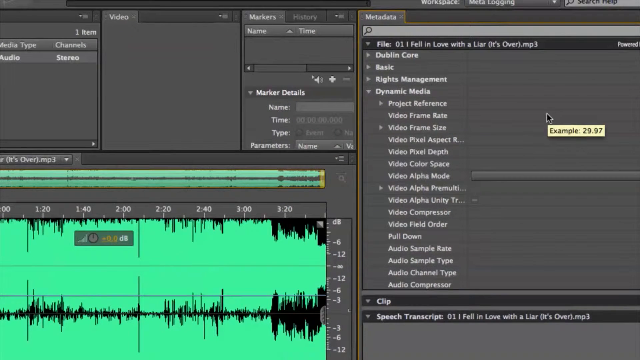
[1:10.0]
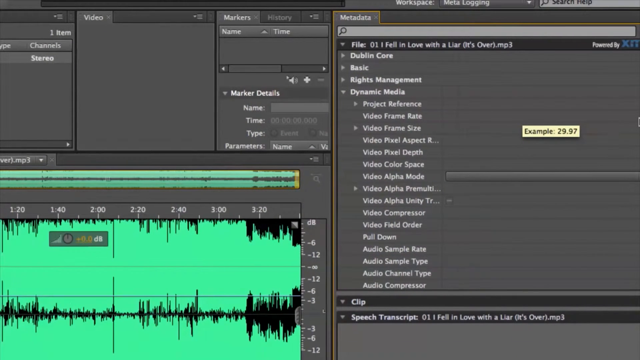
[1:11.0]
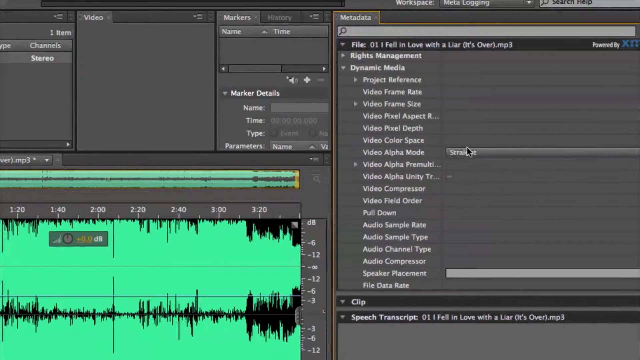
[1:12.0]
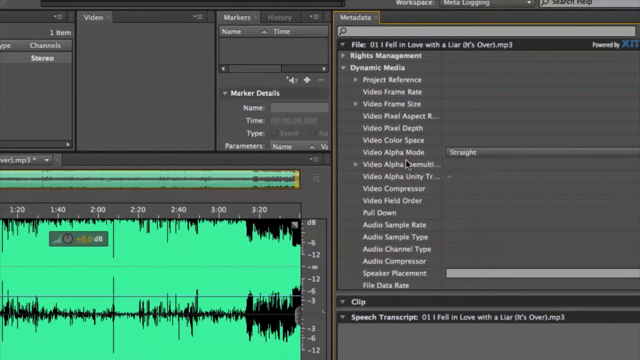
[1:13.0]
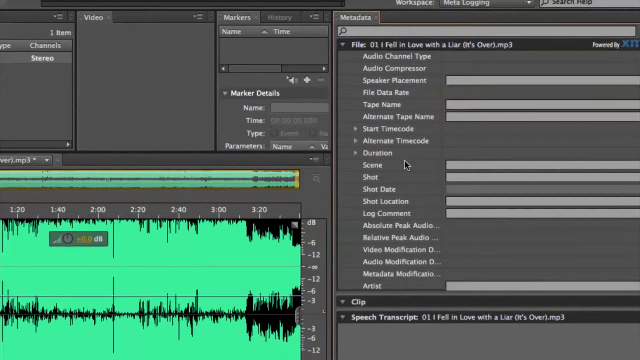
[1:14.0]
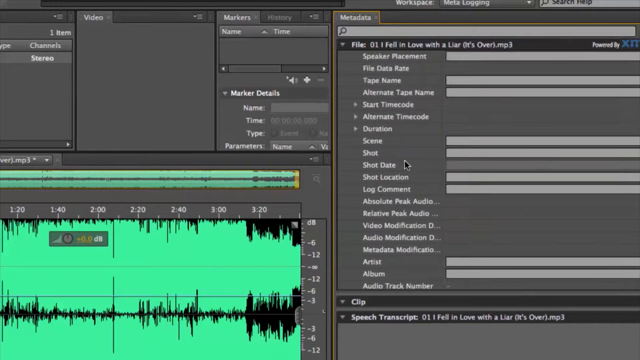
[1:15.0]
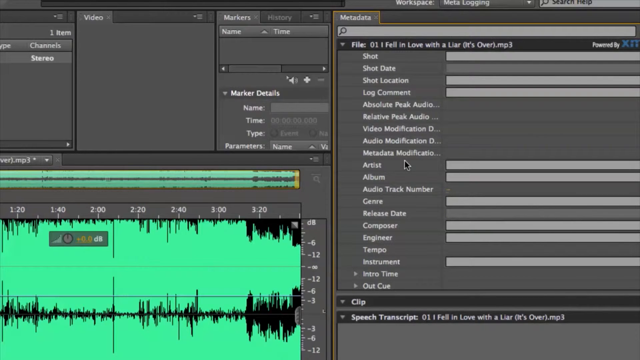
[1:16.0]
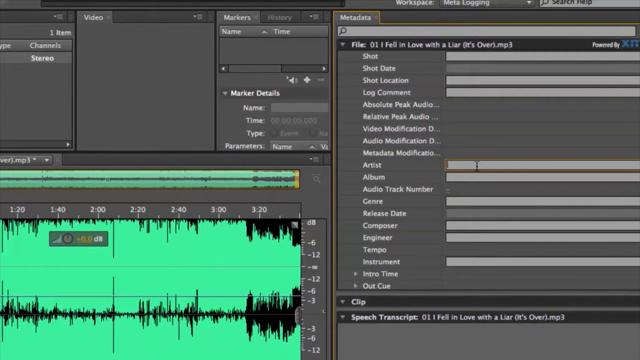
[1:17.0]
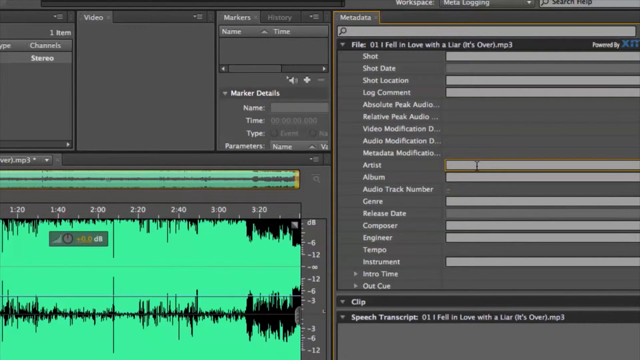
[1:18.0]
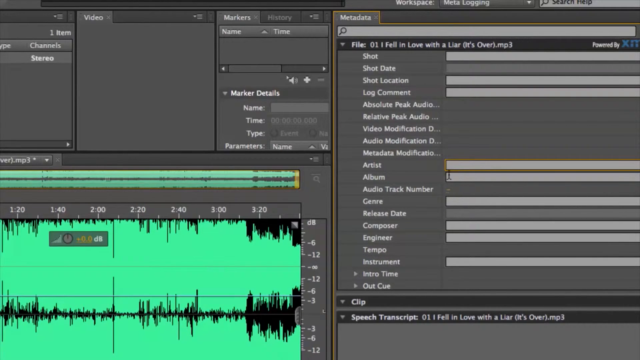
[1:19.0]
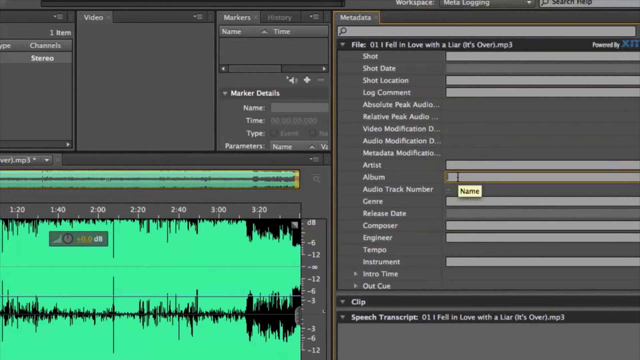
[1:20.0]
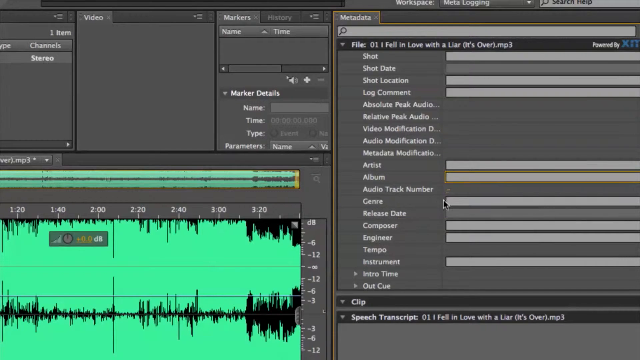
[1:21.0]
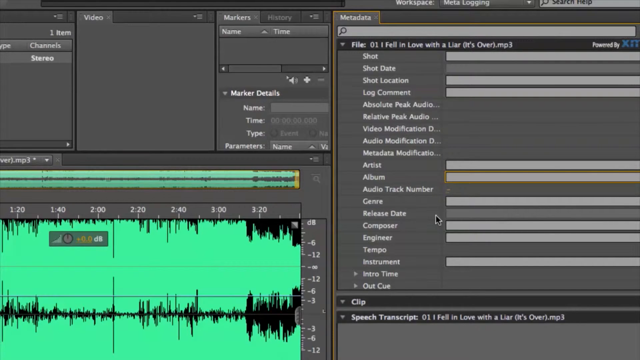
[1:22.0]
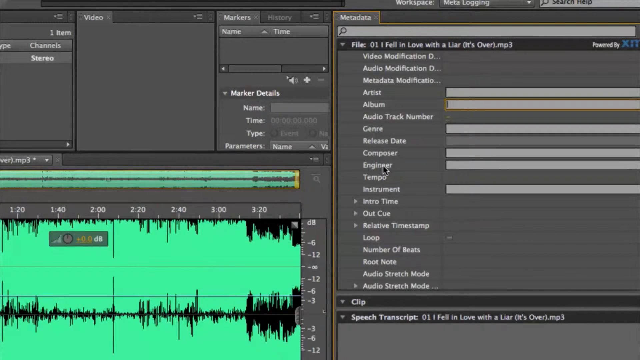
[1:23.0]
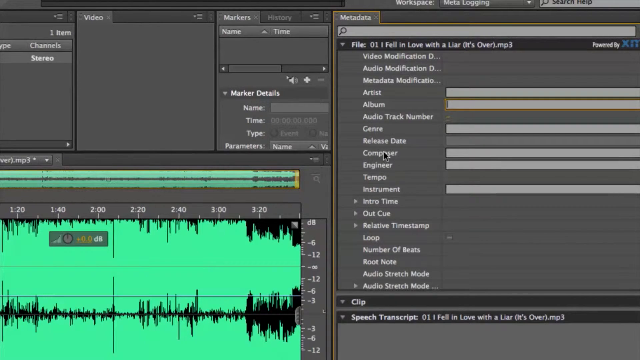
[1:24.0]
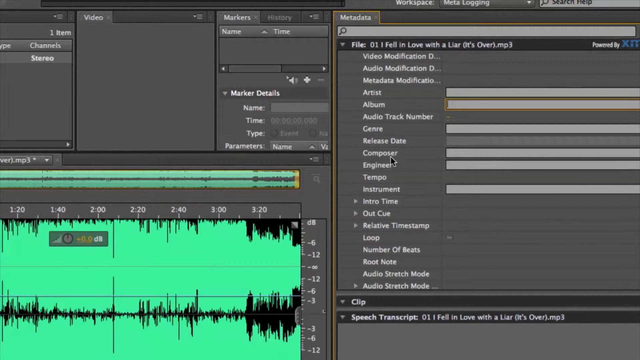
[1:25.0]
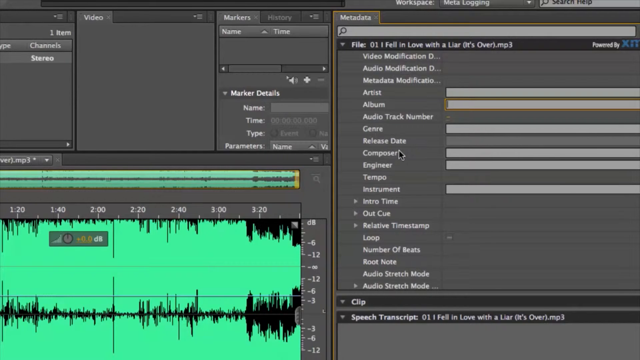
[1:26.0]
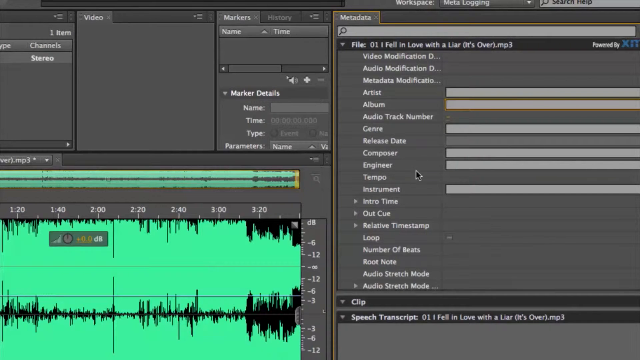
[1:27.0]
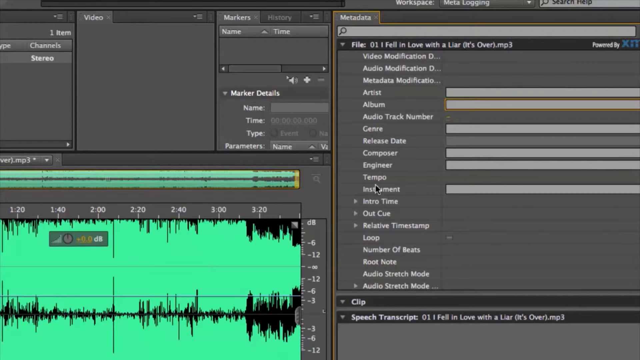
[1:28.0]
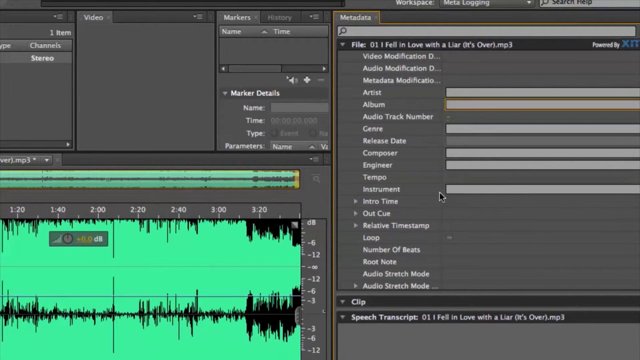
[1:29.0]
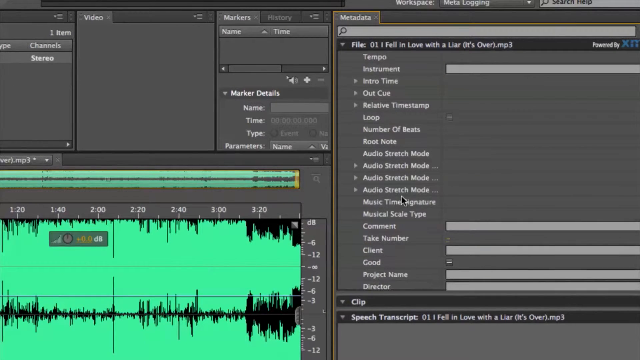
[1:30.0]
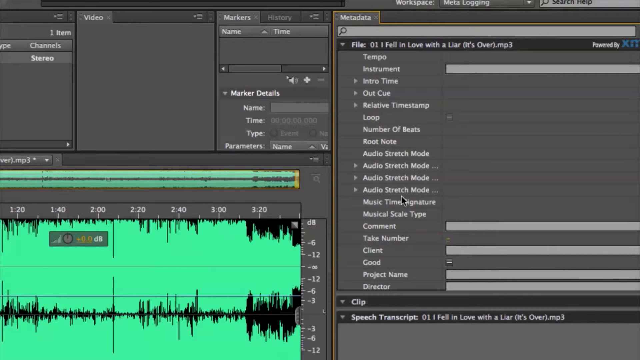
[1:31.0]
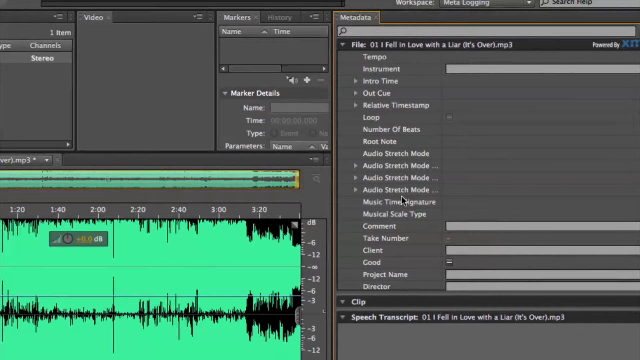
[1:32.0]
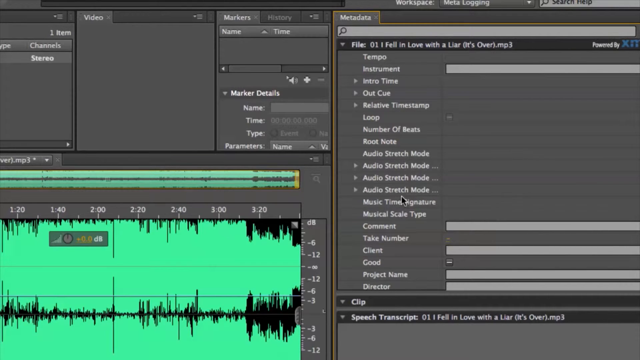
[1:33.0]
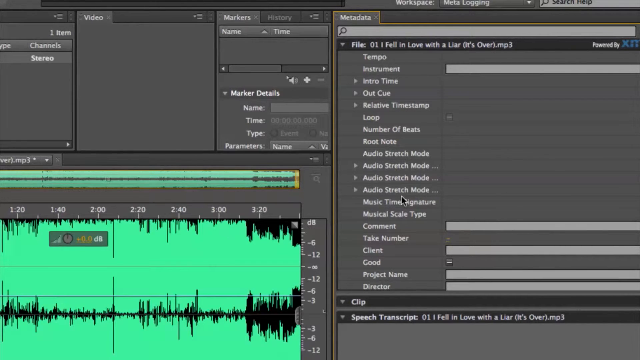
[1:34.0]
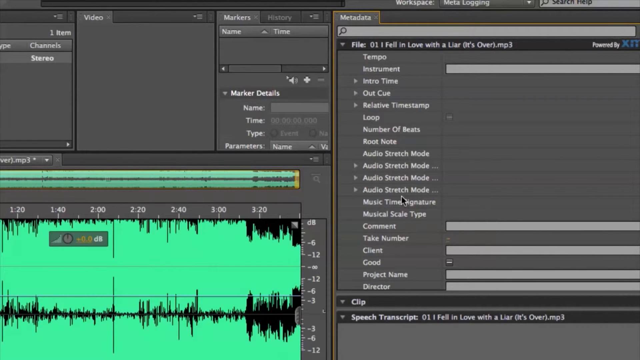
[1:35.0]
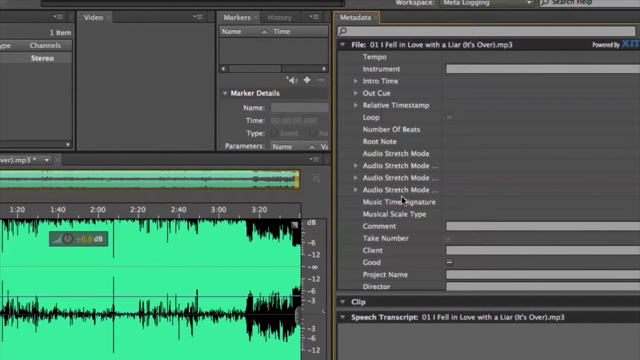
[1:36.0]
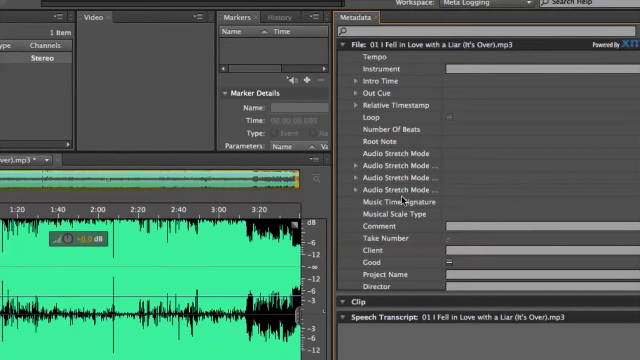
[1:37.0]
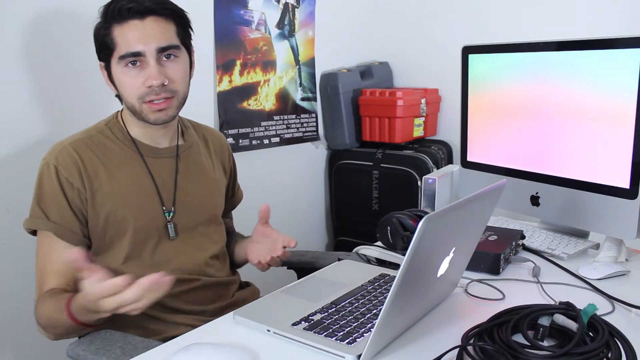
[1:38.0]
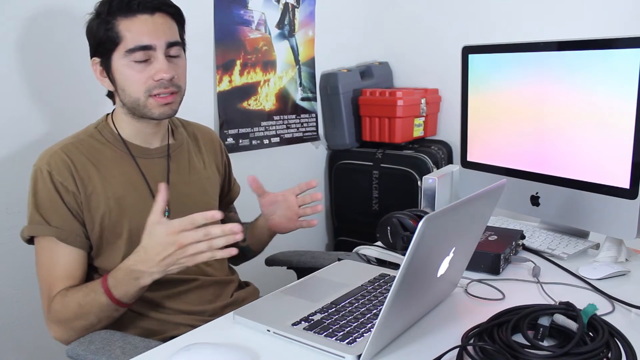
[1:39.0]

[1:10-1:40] The cursor hovers over the metadata window, and a pop-up says "Example 29.97". The cursor goes over to the left side, scrolls down further, and moves over the Artist input field, which is clicked and highlighted in yellow. The cursor goes to Album, then down to Release Date, Engineer and Composer. It moves left to right repeatedly, going from Instrument to the input field, then hovers over audio switch mode. The view then shows the man who was talking before: he has short hair, thick eyebrows and a nose ring, and wears a necklace with a dog tag, a brown shirt and a red wristband on his right arm, with his hands gesturing in front of him. A MacBook is open in front of him and headphones are on the table. To the right of that is some sort of black box interface with a cable coming out, and above it is an iMac screen.